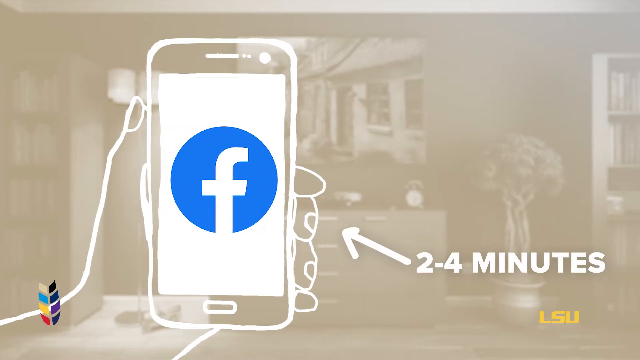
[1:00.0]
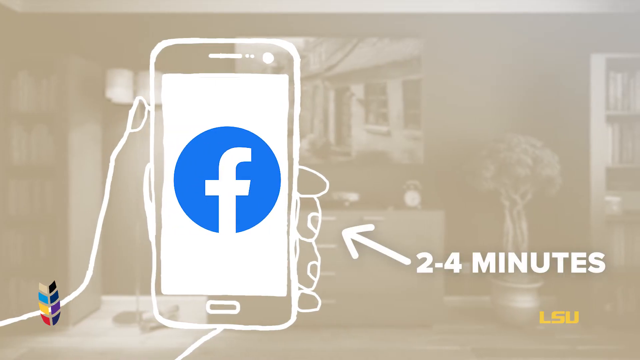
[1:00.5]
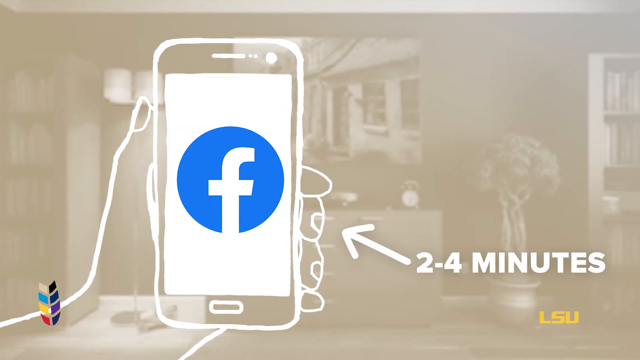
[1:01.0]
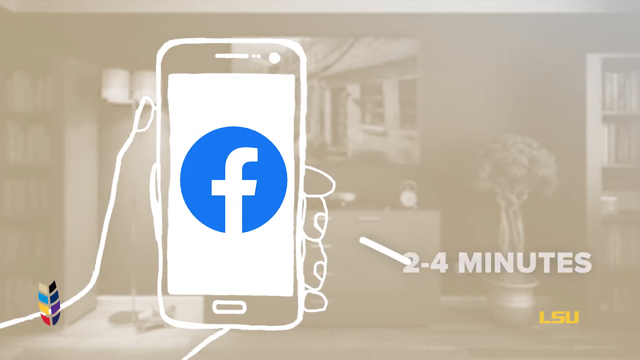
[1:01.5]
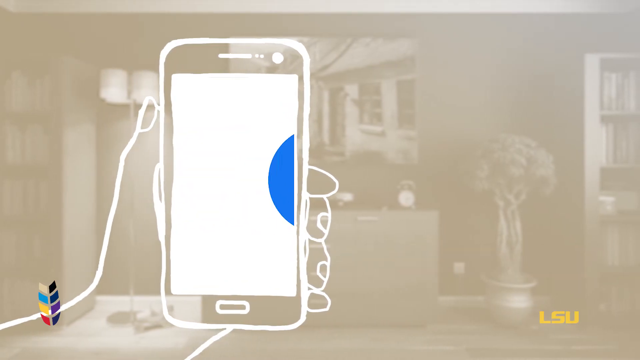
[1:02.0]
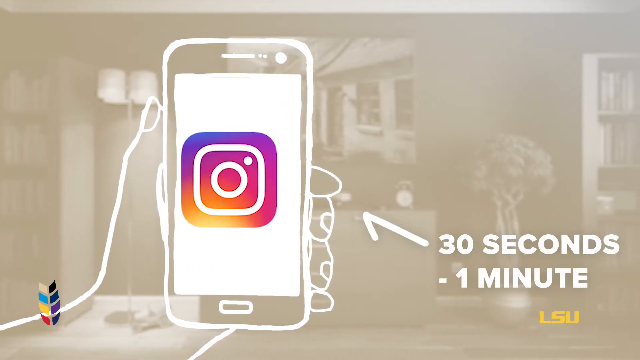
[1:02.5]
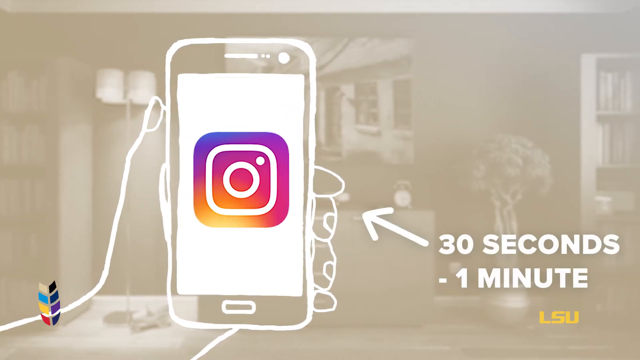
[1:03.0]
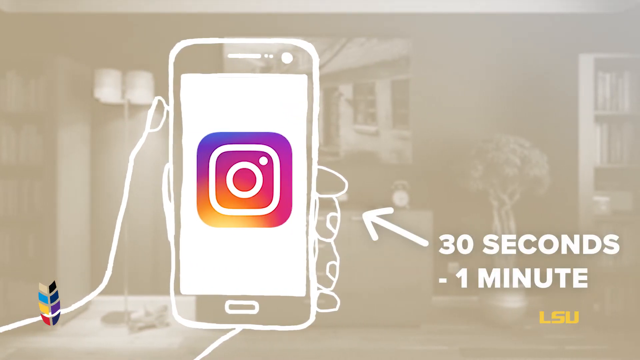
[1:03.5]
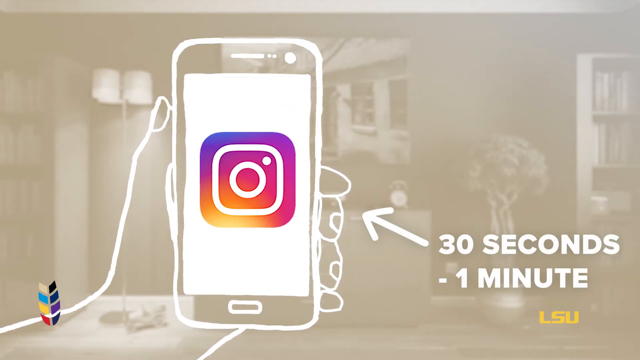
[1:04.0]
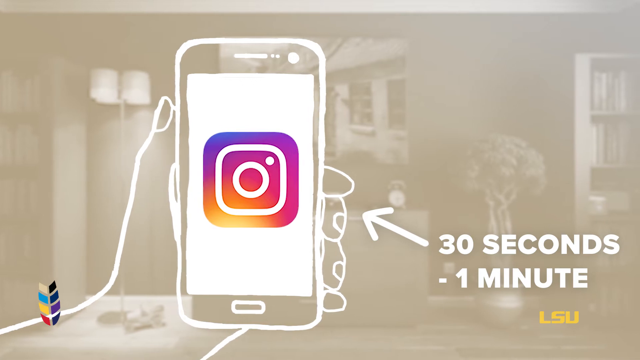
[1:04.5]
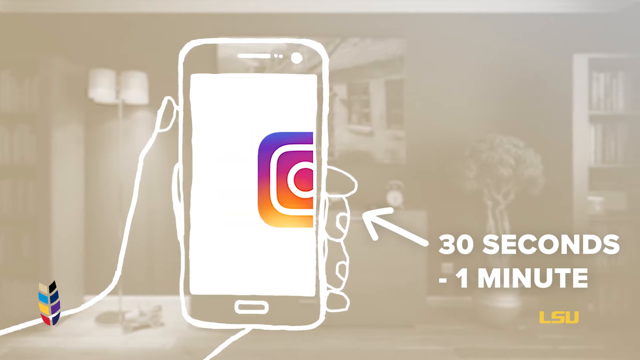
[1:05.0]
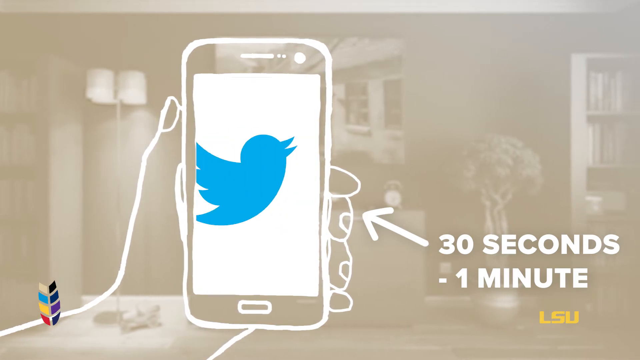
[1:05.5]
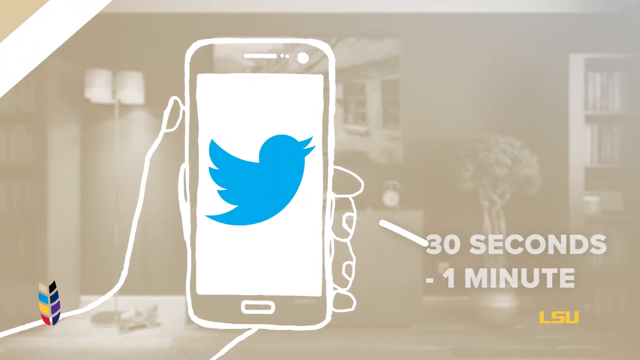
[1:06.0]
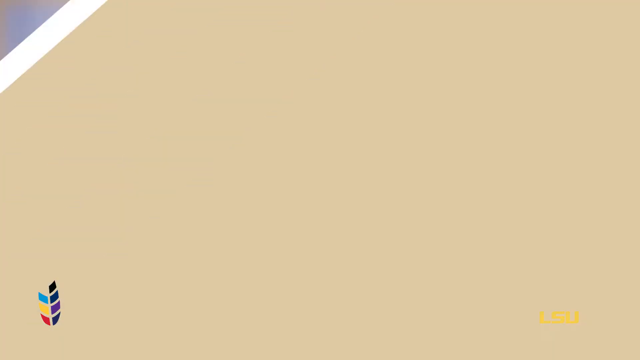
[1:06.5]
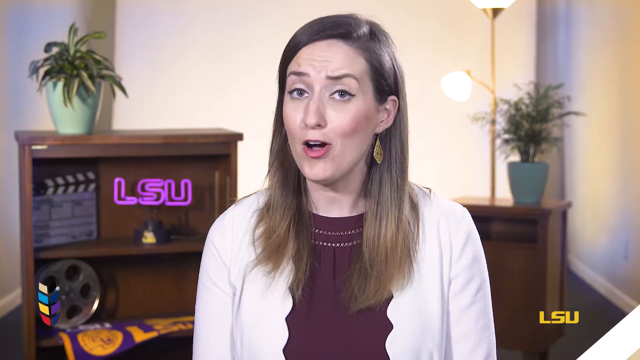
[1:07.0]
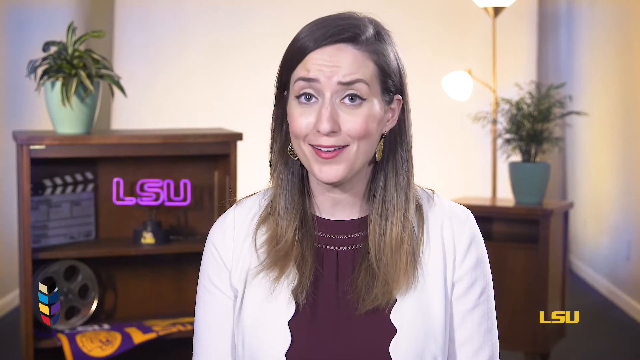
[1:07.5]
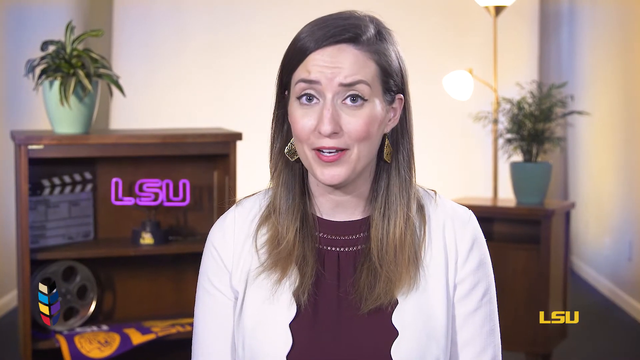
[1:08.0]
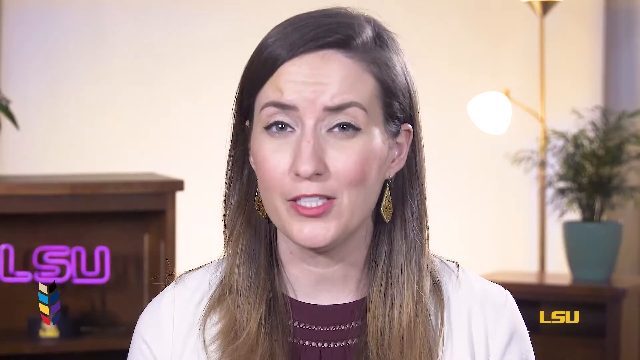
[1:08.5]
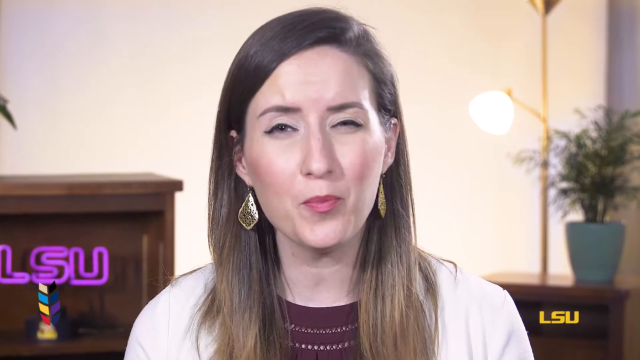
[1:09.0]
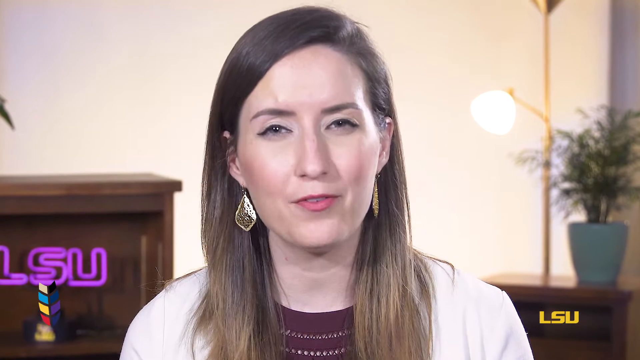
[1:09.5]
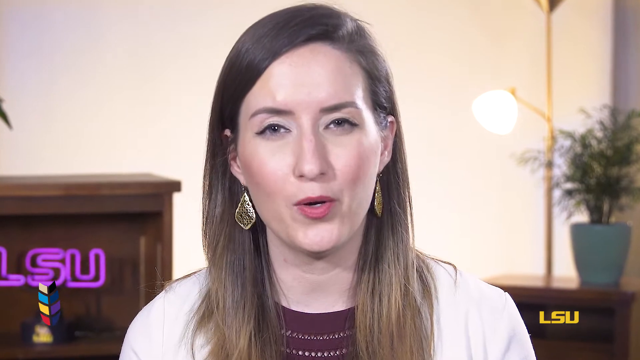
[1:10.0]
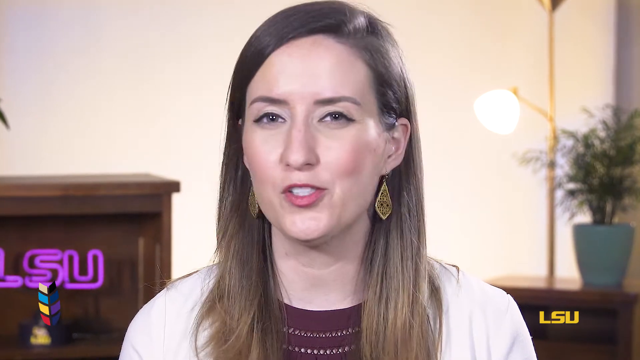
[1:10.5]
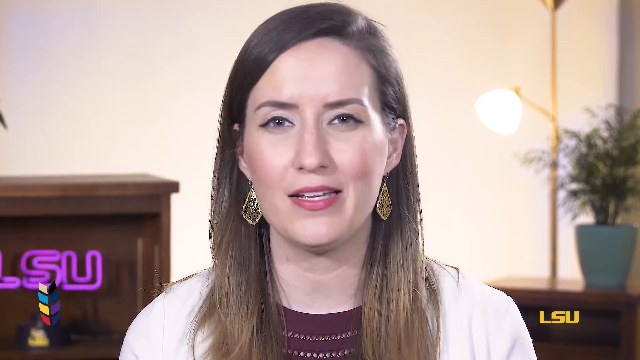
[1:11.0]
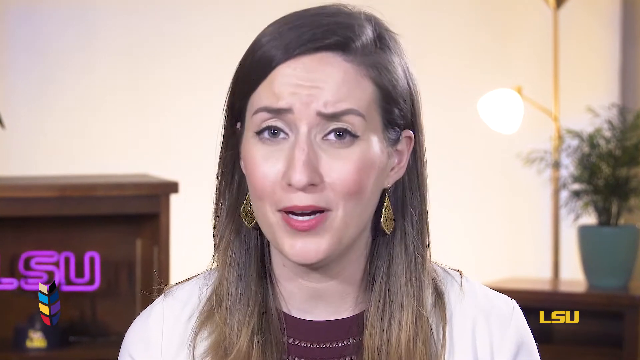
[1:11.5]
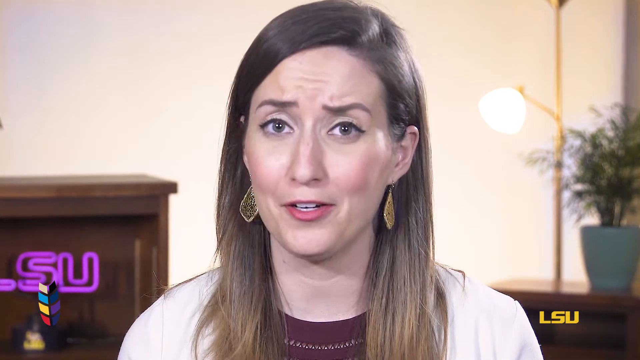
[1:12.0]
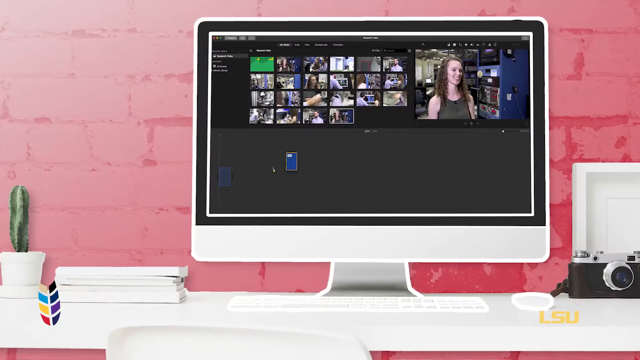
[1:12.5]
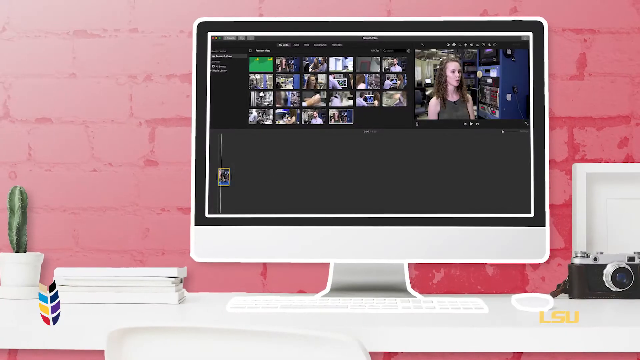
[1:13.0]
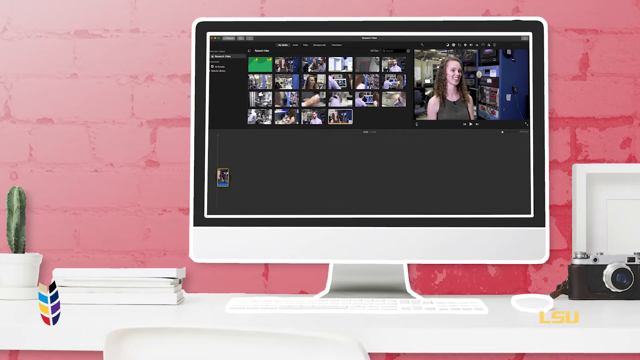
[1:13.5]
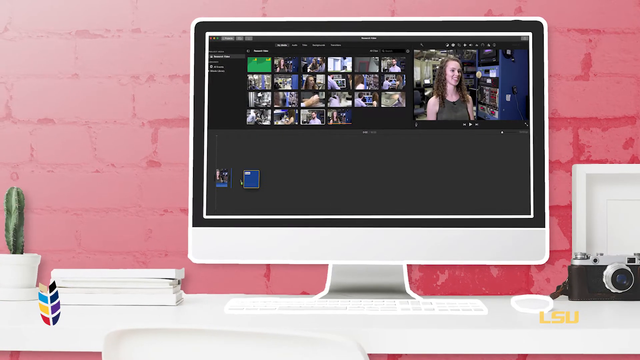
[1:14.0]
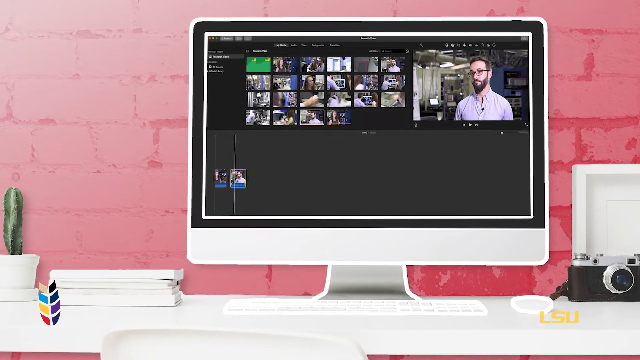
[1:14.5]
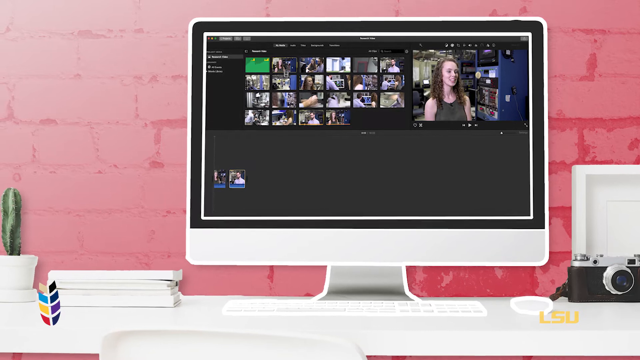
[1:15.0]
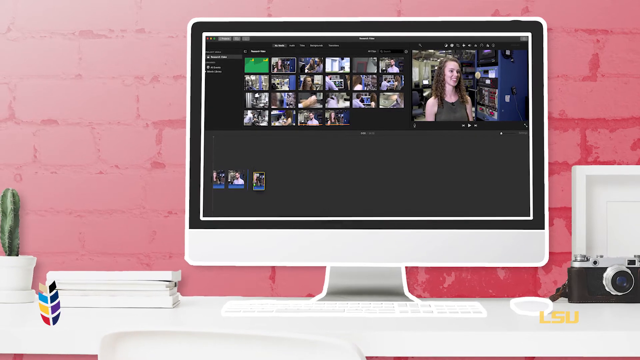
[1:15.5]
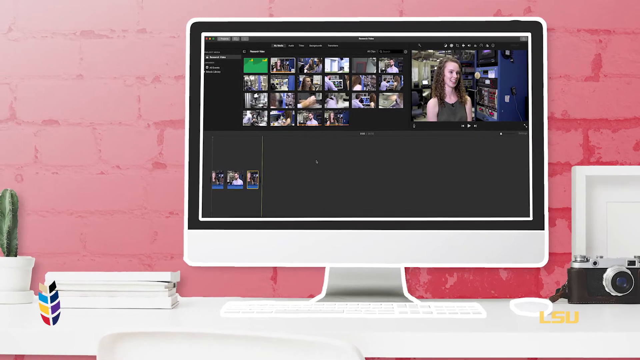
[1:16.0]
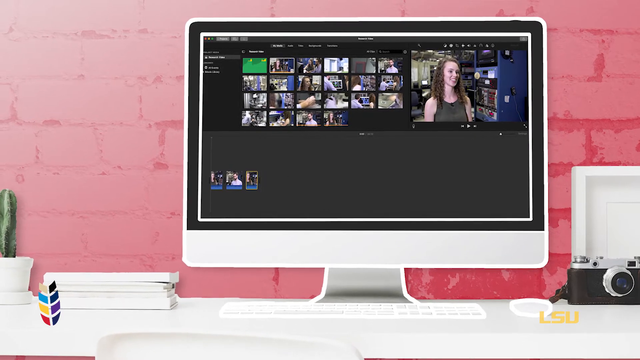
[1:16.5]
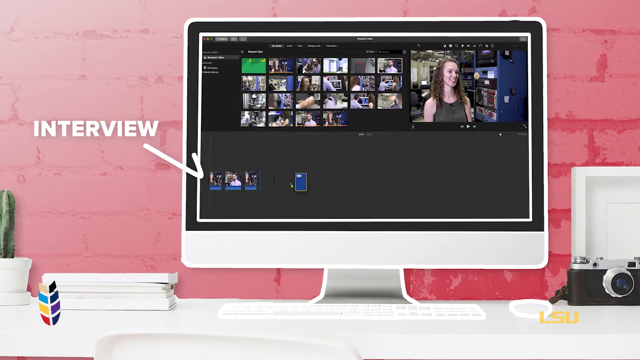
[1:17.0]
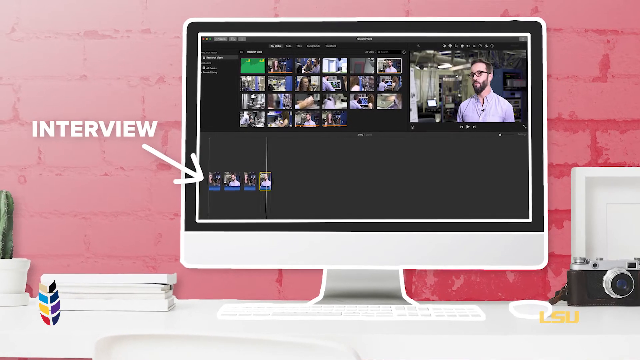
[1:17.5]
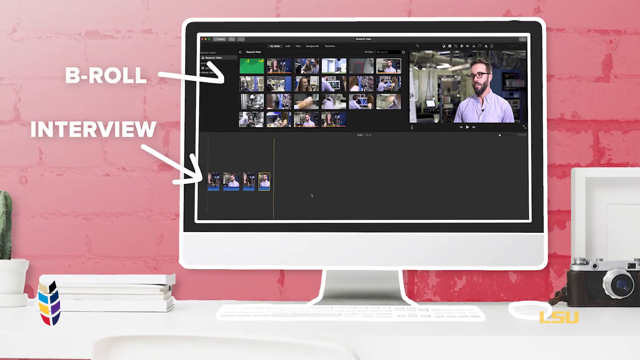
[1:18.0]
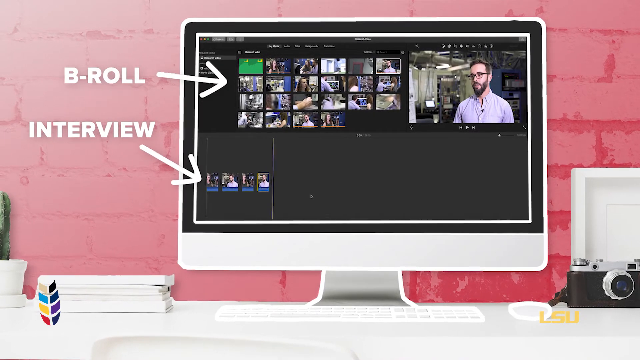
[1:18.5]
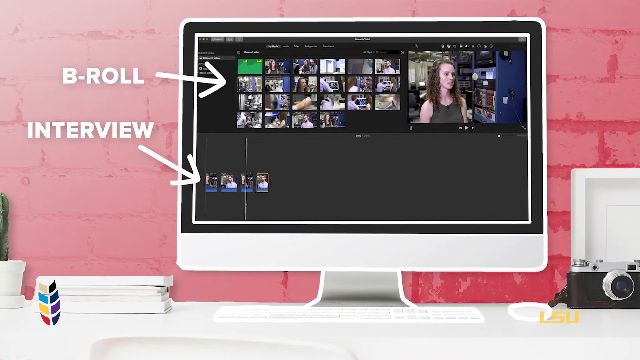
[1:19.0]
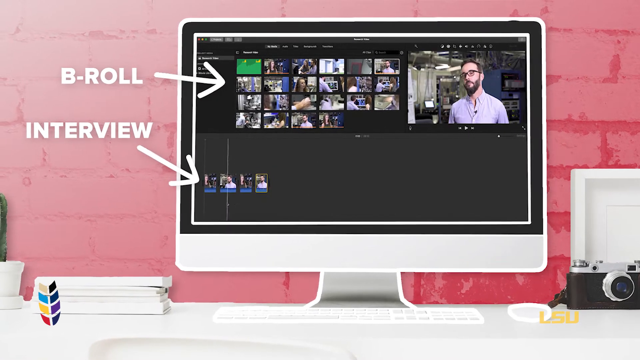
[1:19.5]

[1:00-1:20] An animated drawing shows a hand holding a cell phone, with different social media icons scrolling across the screen and different time durations stated on it: "two minutes," "30 seconds," "a minute." The video cuts to the narrator, a white woman in a burgundy blouse and white cardigan, whose portion is very short. It then cuts to a drawing of a laptop or computer screen where it looks like someone is editing a video. The clips and cuts are quick. Captions on the last shot say "B-roll" and other editing terms.